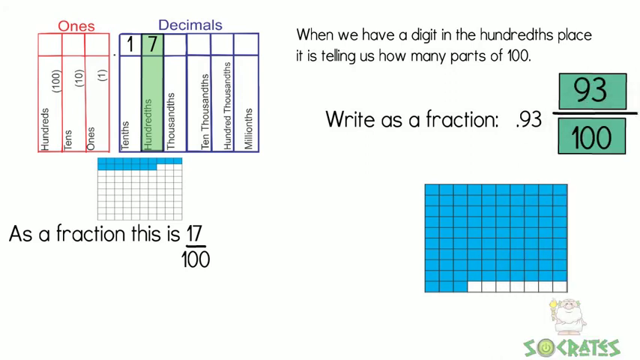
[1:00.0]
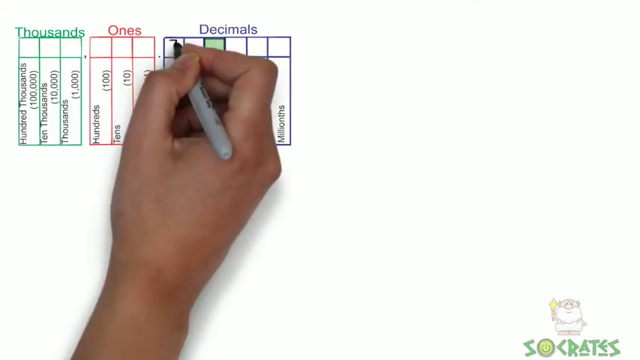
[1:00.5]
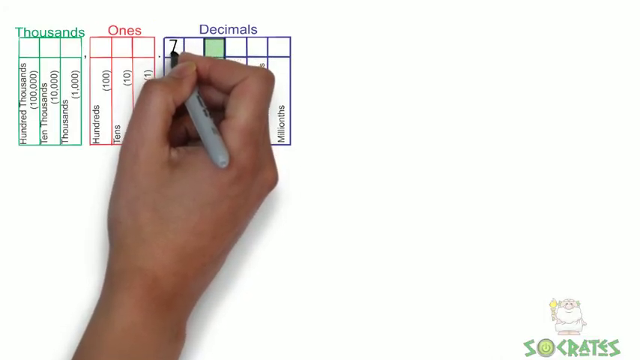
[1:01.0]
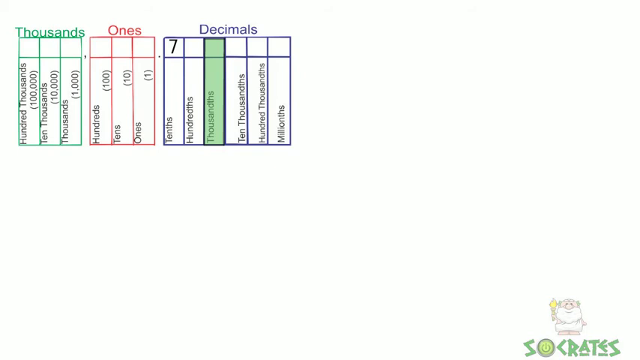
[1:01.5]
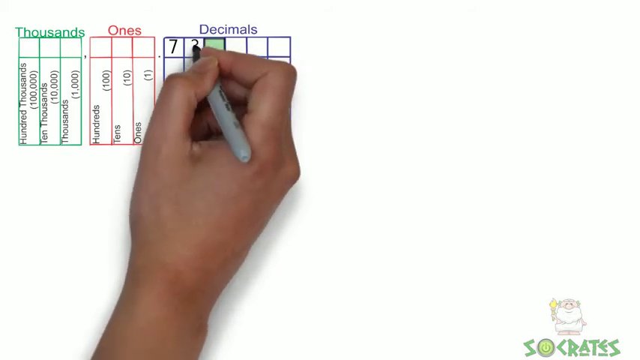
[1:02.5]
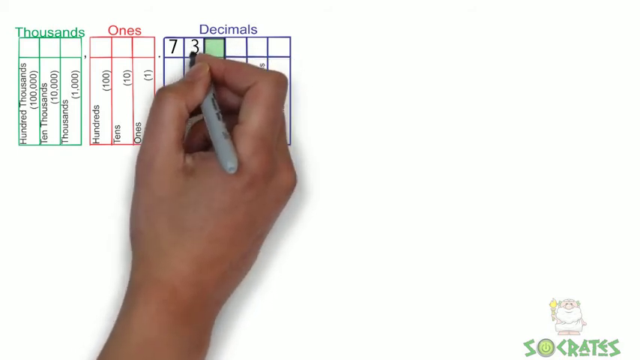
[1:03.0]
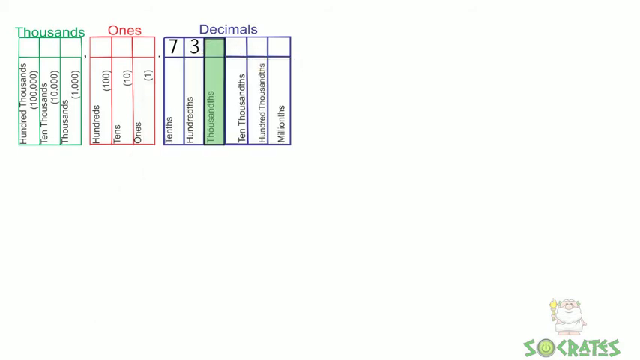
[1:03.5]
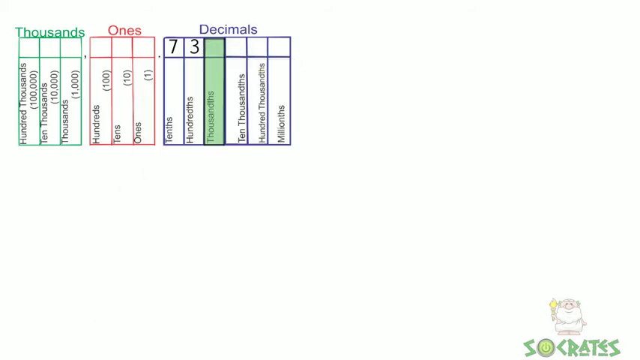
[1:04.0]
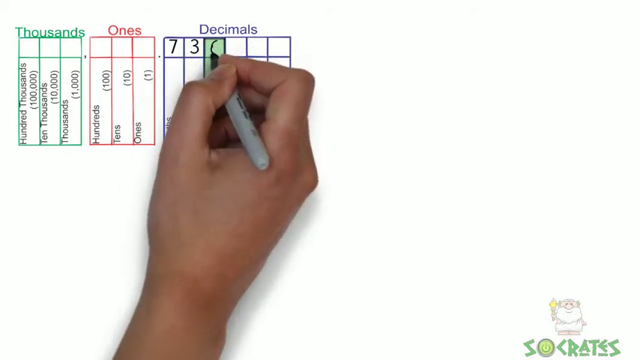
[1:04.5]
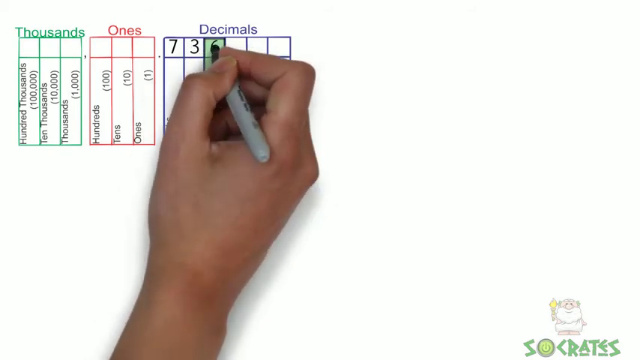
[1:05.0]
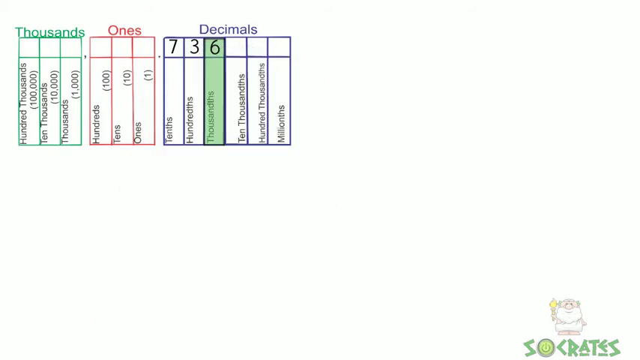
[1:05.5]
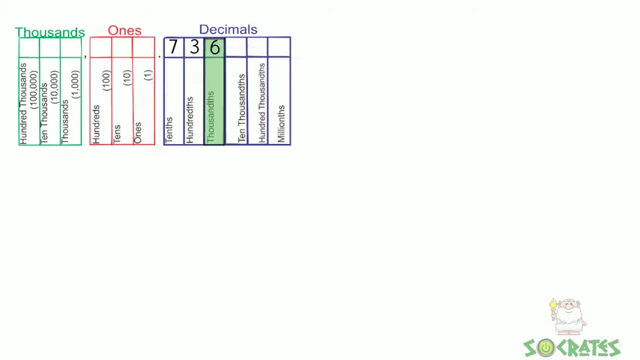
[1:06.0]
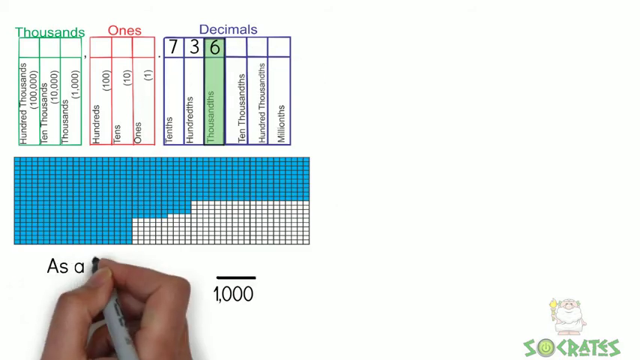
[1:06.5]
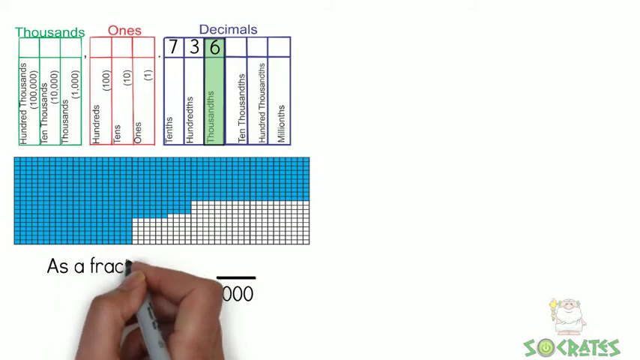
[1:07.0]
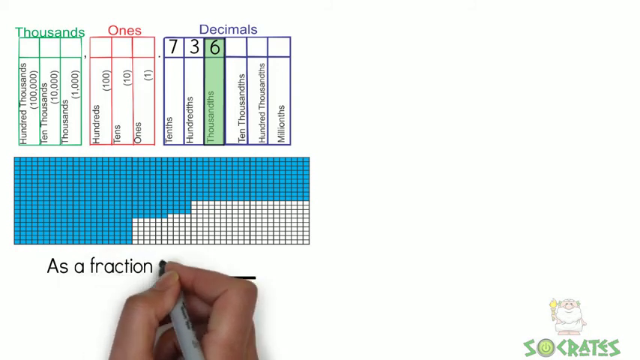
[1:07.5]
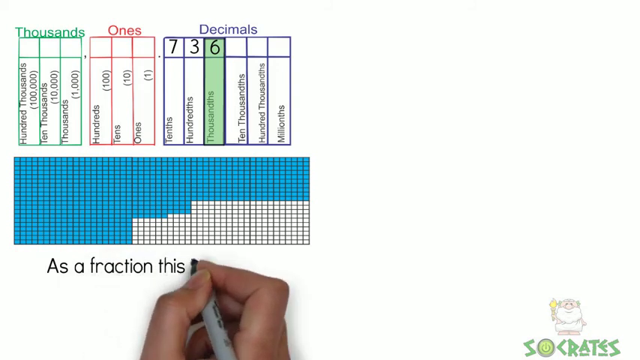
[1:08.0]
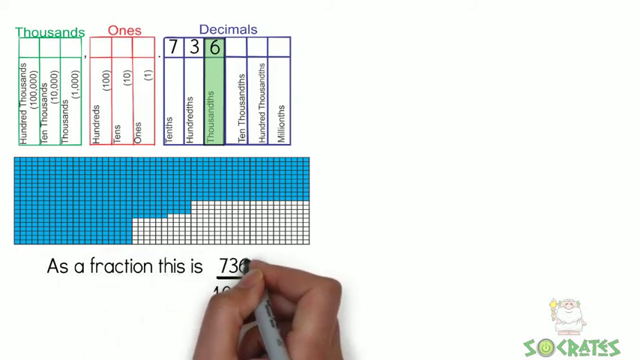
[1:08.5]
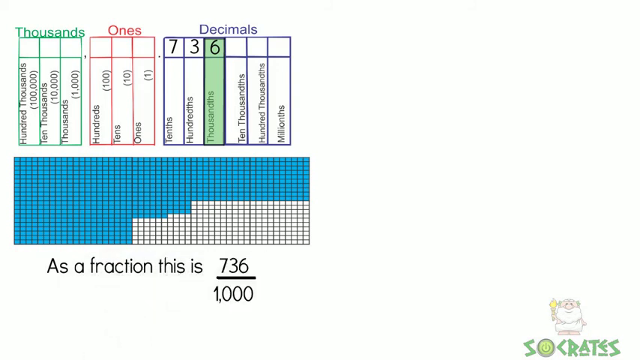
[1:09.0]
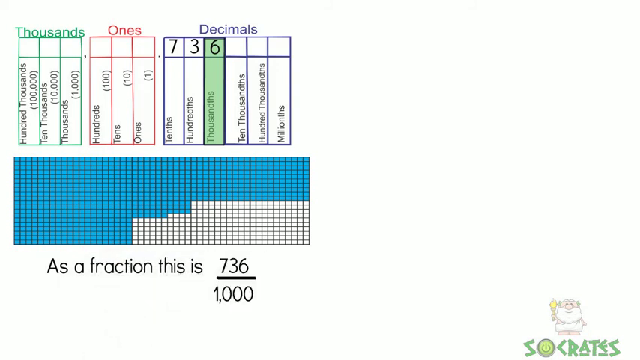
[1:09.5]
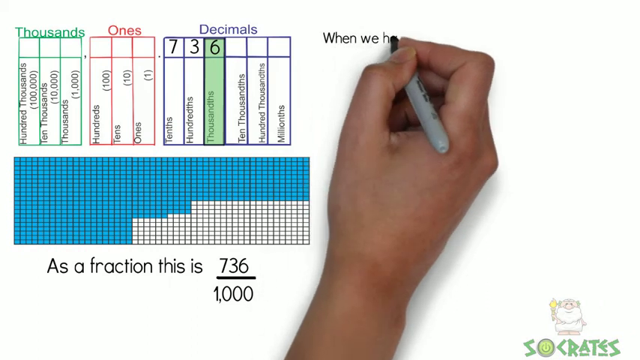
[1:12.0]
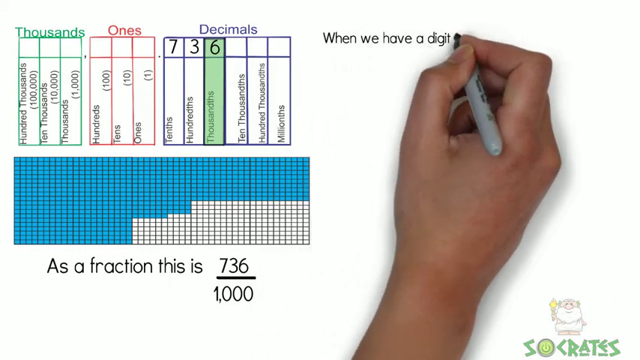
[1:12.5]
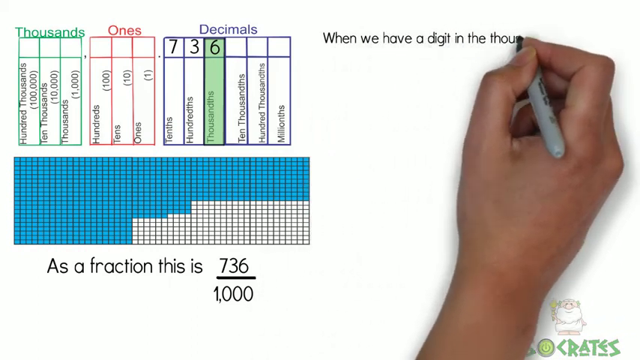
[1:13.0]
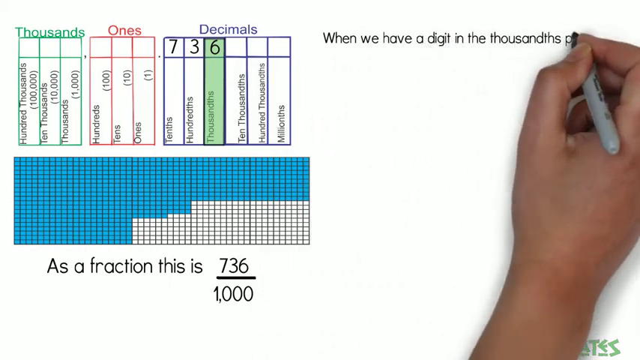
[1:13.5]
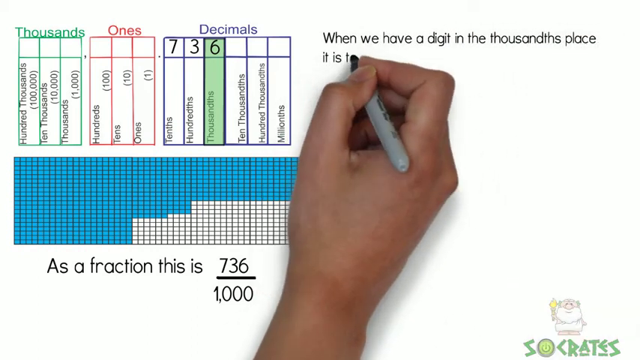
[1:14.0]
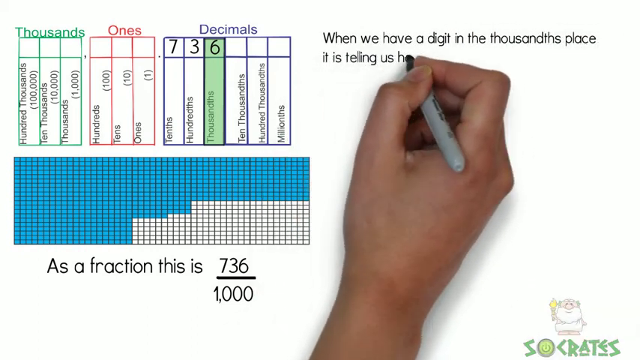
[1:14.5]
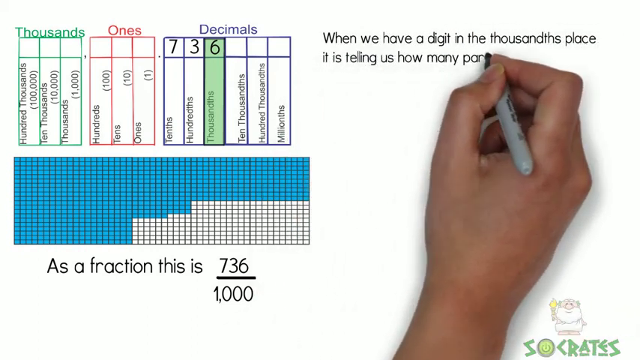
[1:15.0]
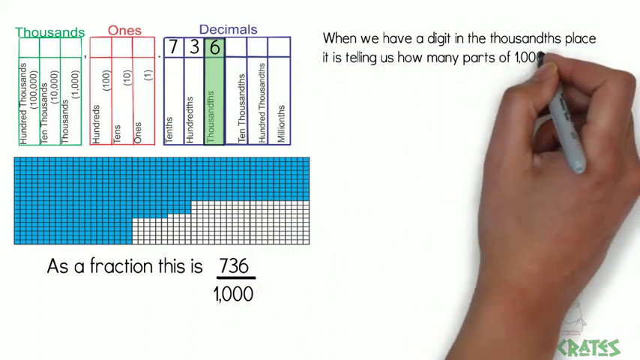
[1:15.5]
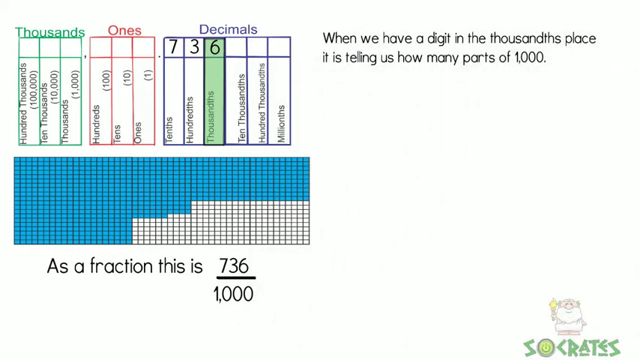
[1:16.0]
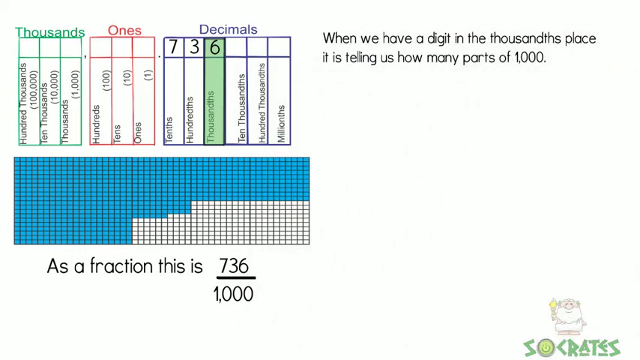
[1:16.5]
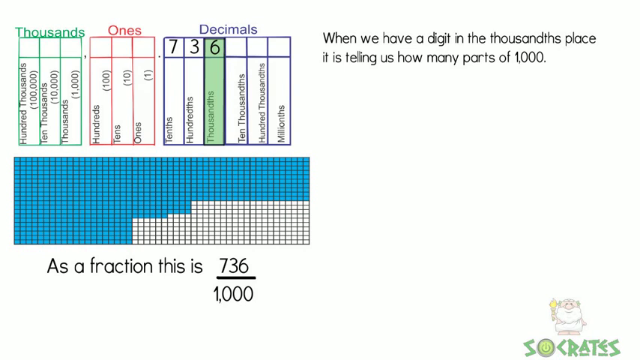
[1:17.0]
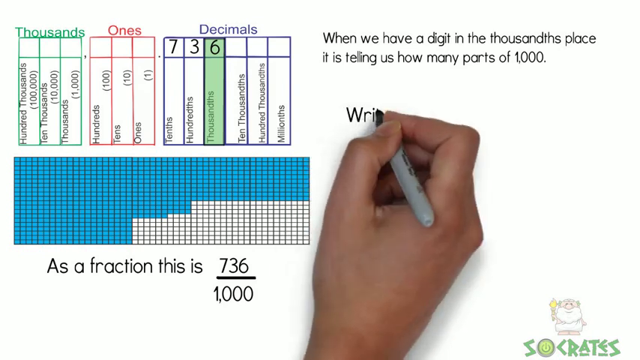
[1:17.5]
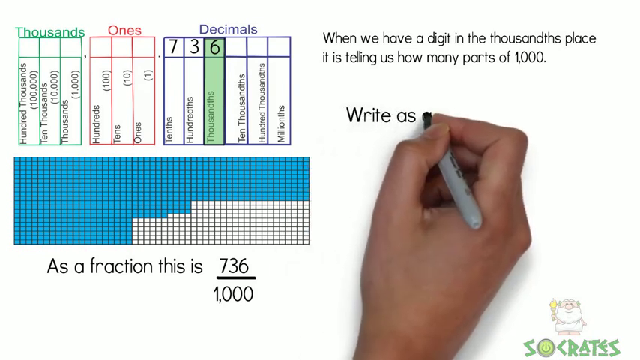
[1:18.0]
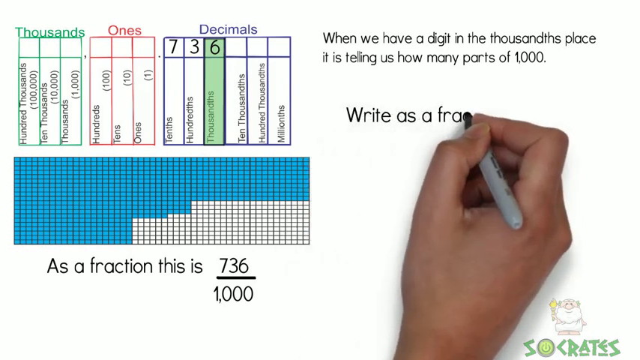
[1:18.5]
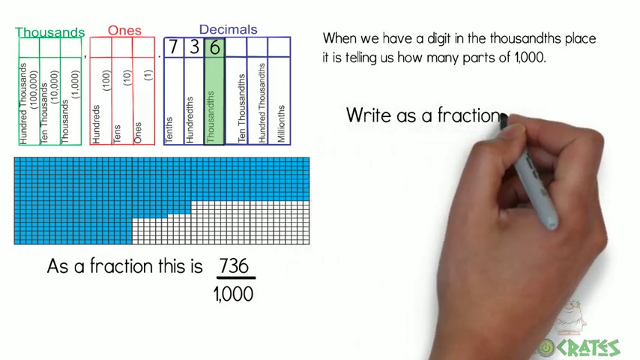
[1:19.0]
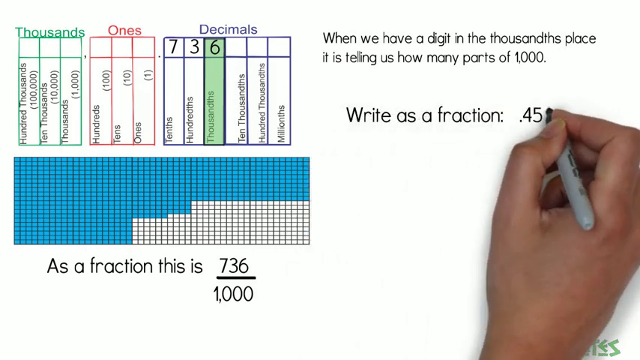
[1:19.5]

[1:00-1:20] Three blocks are labelled thousands, ones and decimals. Under decimals there is a 7 under tenths, a 3 under hundredths and a 6 under thousandths, with the 6 highlighted in green. The hand with the black pen writes "as a fraction this is 736 divided by 1000", and 736 out of 1000 blocks are highlighted in blue while the rest are white. The hand continues writing "when we have a digit in the thousandths place, it is telling us how many parts of one thousand." It then writes "write as a fraction .459". The thousands blocks are green, the ones are red and the decimals are blue. A white animal holding up a candle is in the bottom right corner, with the word "Socrates".